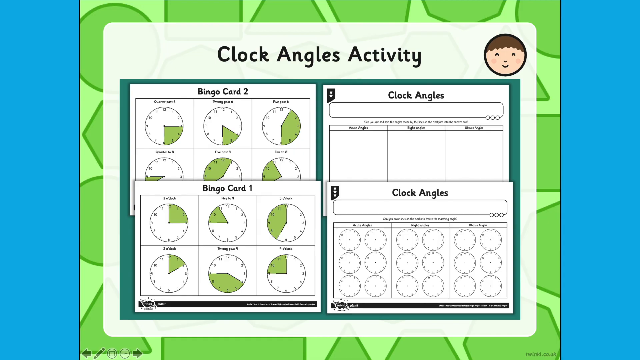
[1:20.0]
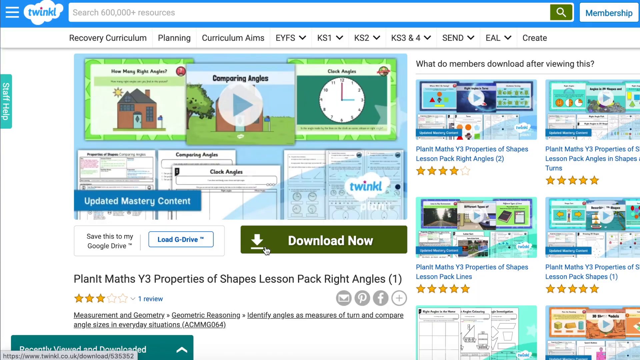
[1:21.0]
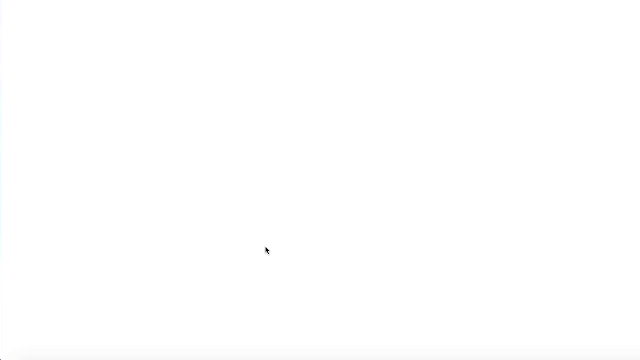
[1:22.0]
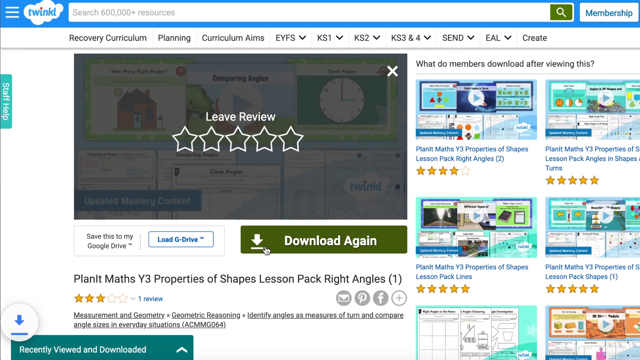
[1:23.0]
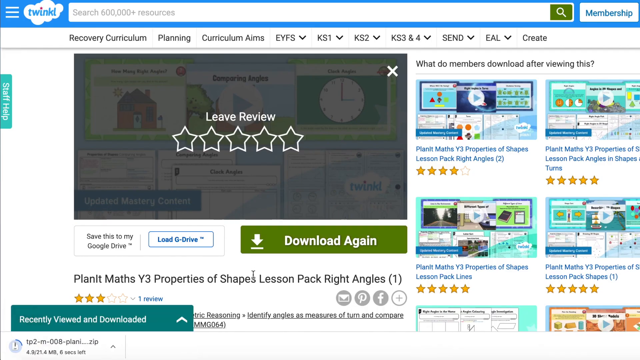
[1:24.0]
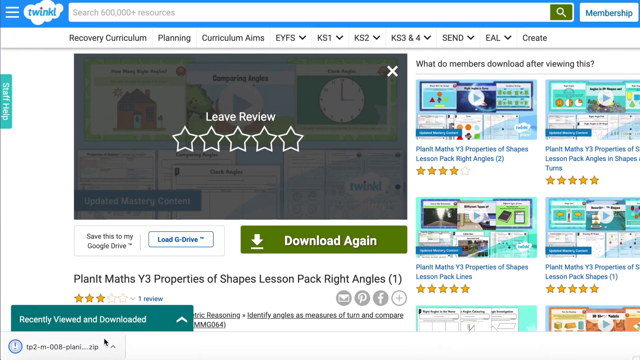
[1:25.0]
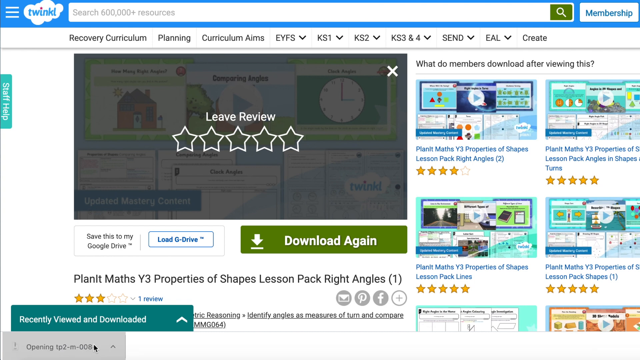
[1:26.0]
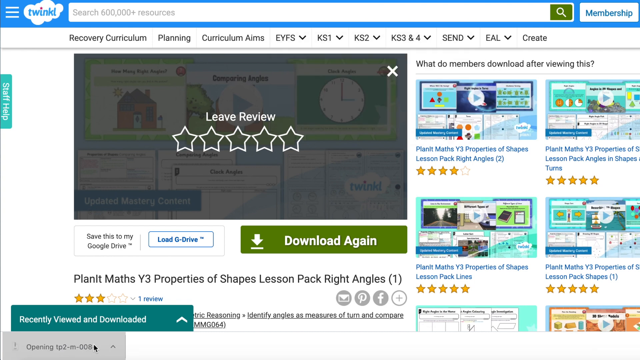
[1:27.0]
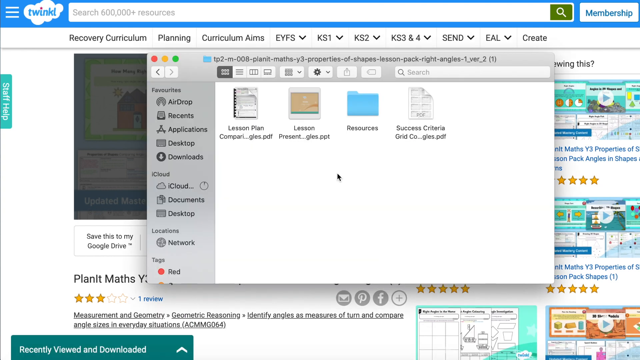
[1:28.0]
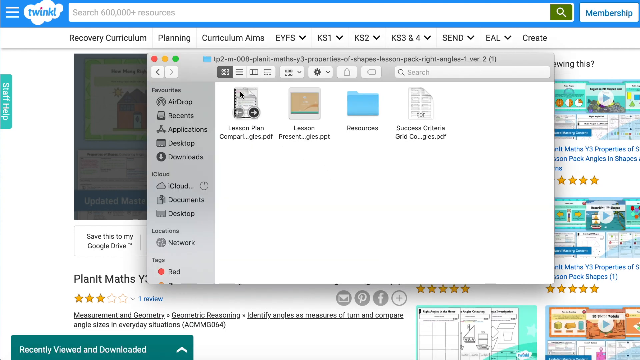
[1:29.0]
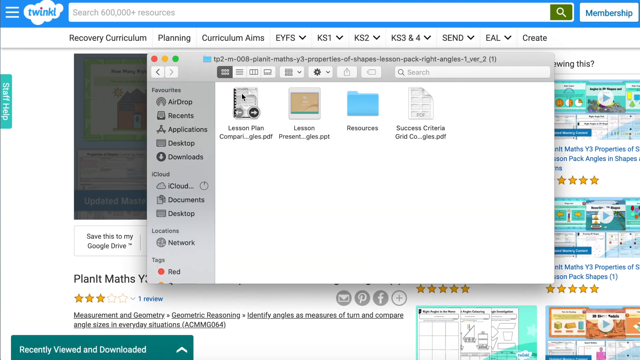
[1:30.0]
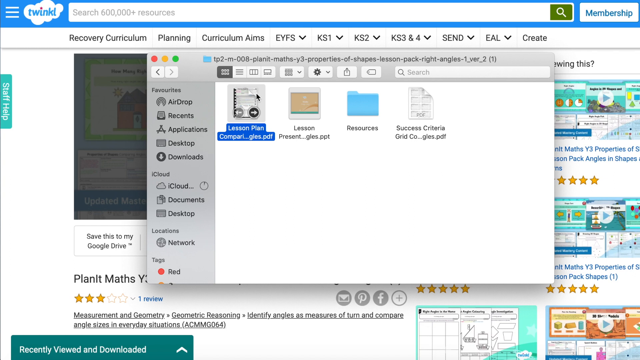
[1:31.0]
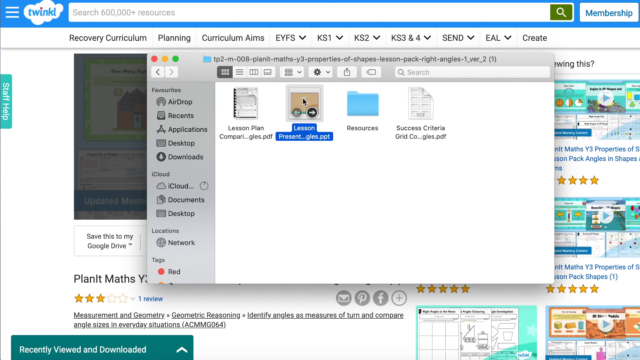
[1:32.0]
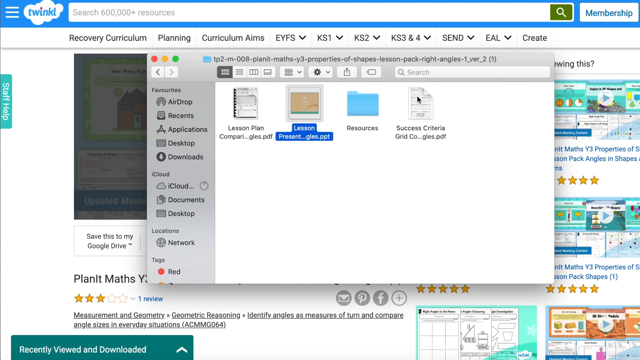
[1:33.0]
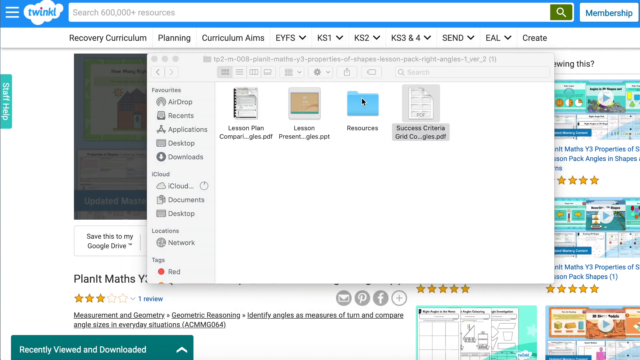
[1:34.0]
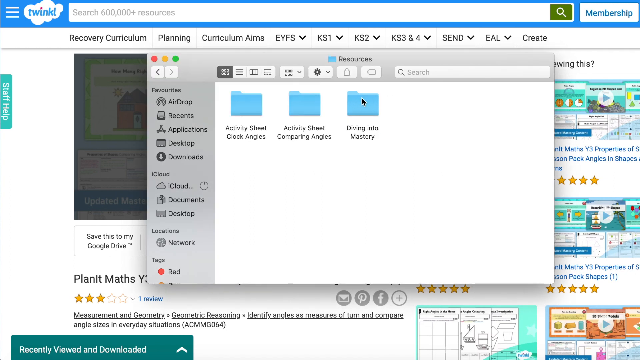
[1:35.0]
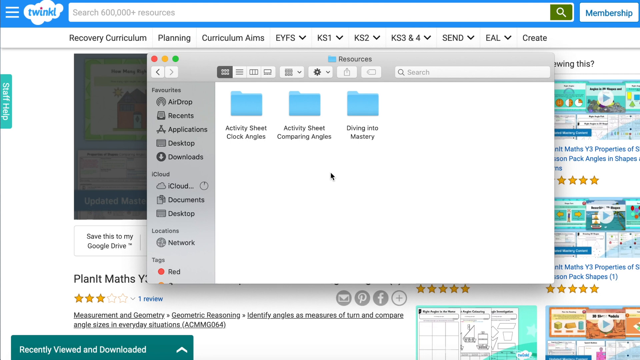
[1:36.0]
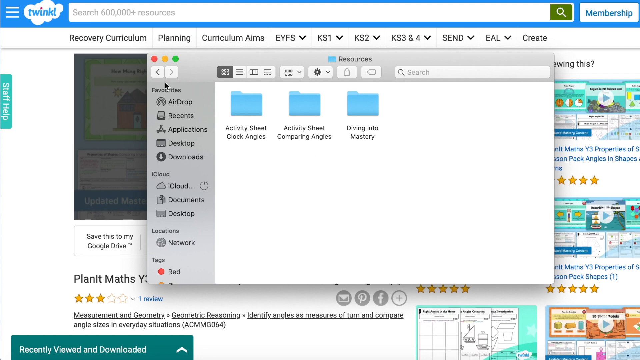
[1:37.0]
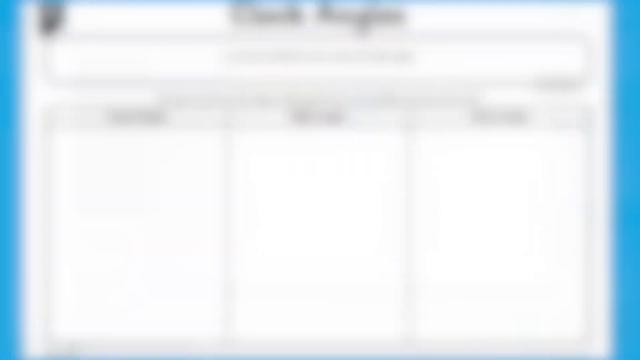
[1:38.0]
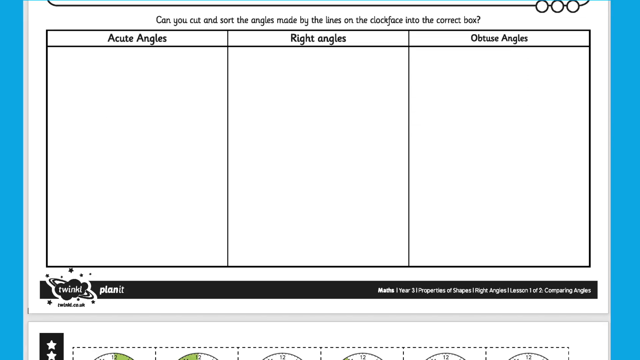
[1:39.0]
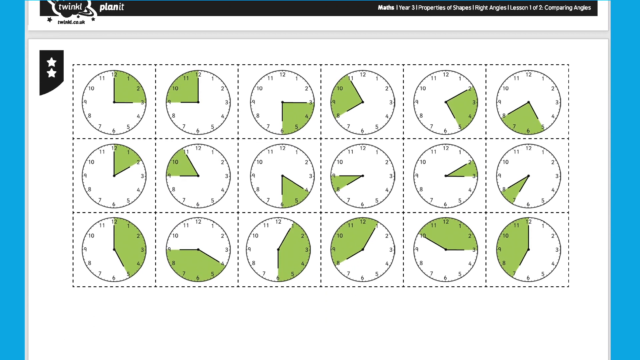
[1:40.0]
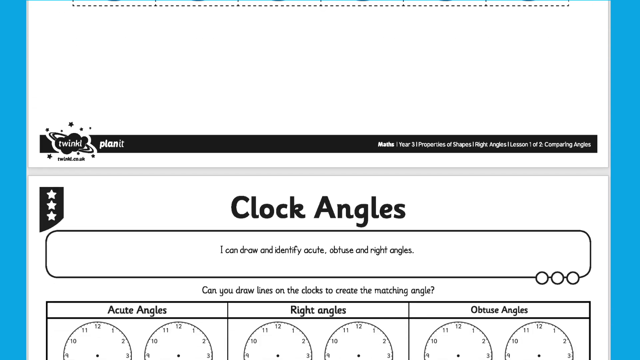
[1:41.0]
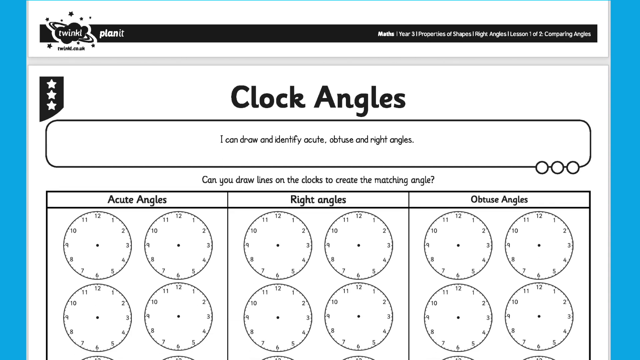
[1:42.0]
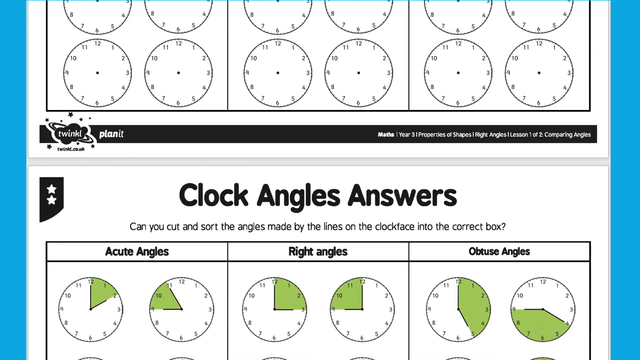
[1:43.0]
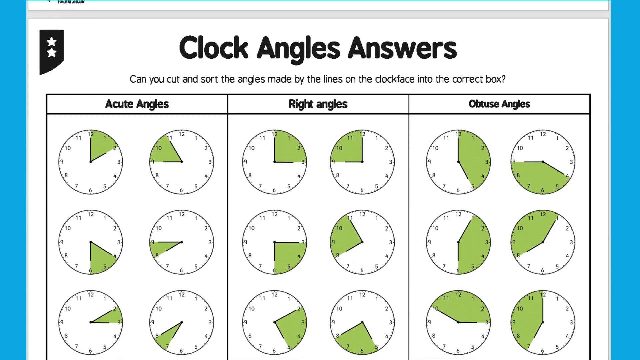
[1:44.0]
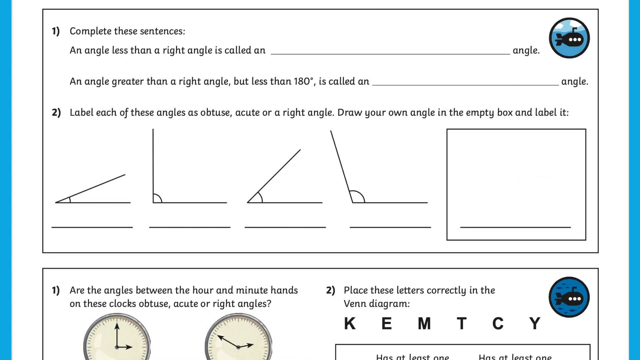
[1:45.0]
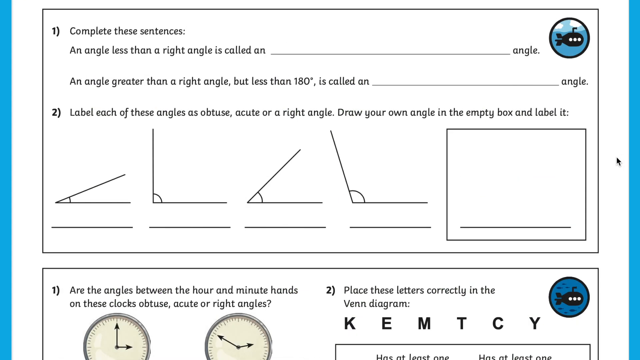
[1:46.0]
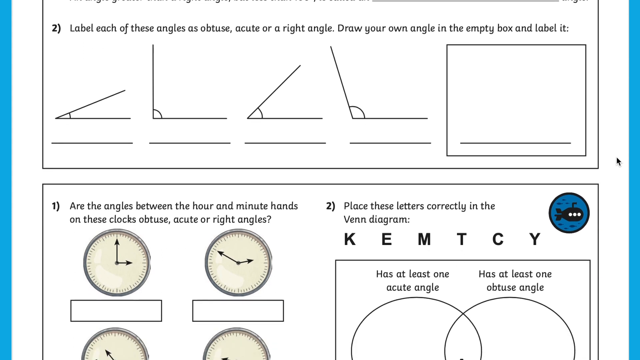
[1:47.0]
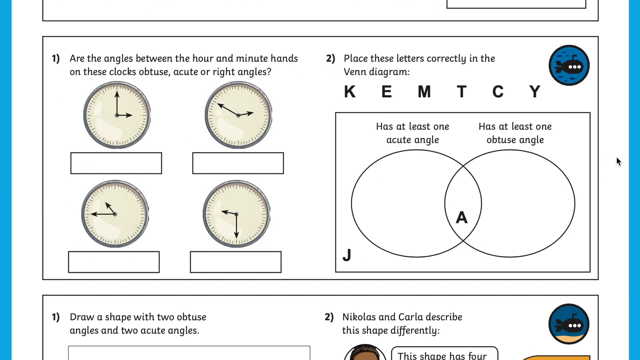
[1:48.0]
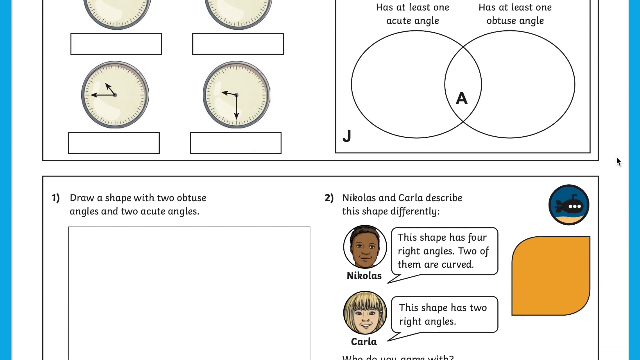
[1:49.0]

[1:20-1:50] The screen changes to one showing "600,000 plus resources", with options including recovery curriculum, curriculum plan, planning, curriculum aims, IEYFS, KS1, KS2, KS3, KS4, SEND, EA and CREATE. On the right-hand side is a download option for members, along with different templates and videos that can be watched, zoomed and downloaded. On the left-hand side is an option to leave a review with five stars. A page opens showing planets, properties of shape, and right angle, followed by a download option and templates. A different window then opens with lesson plans, another lesson plan, and resources showing different shapes, angles and numbers of angles.